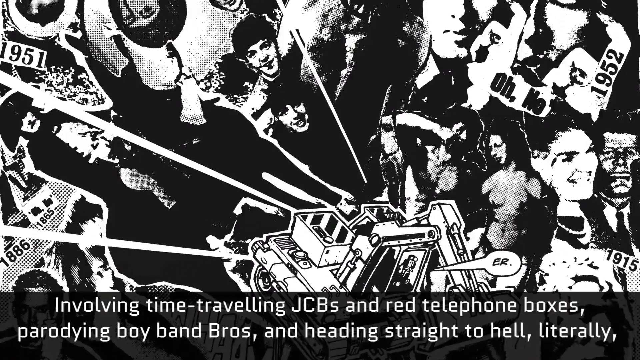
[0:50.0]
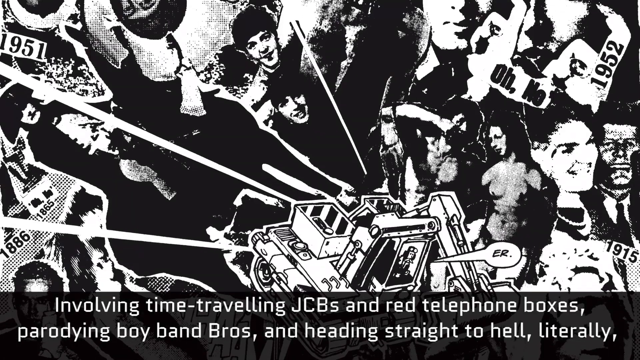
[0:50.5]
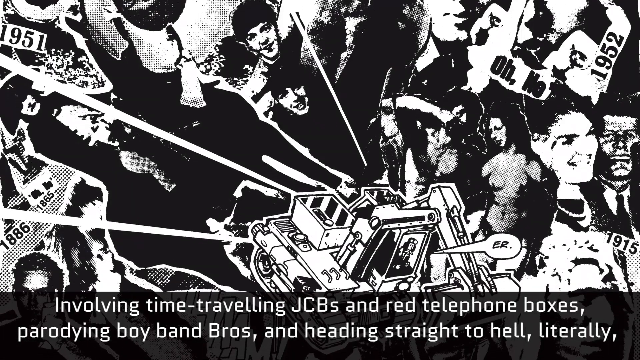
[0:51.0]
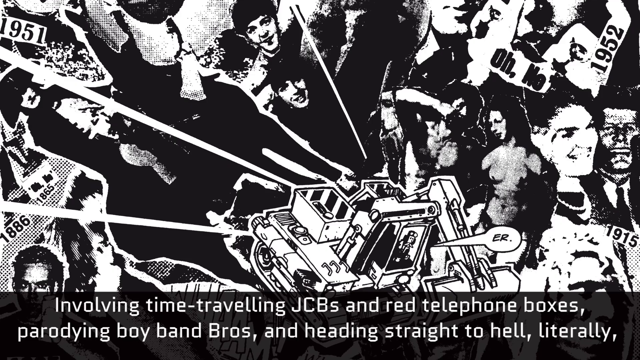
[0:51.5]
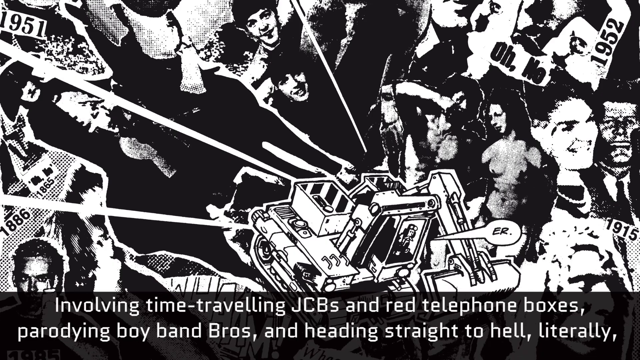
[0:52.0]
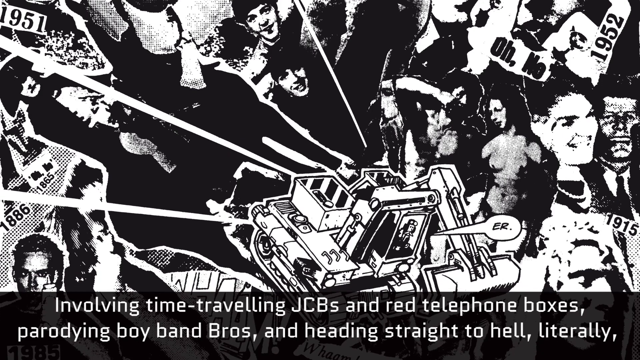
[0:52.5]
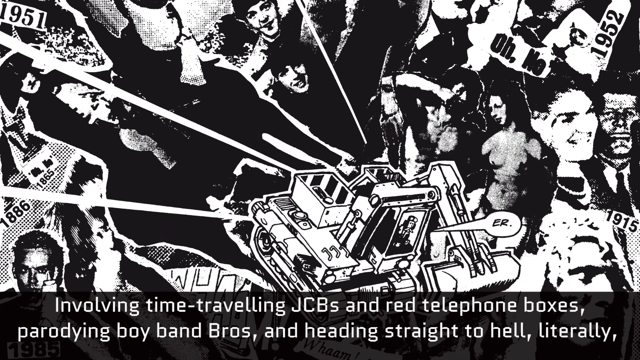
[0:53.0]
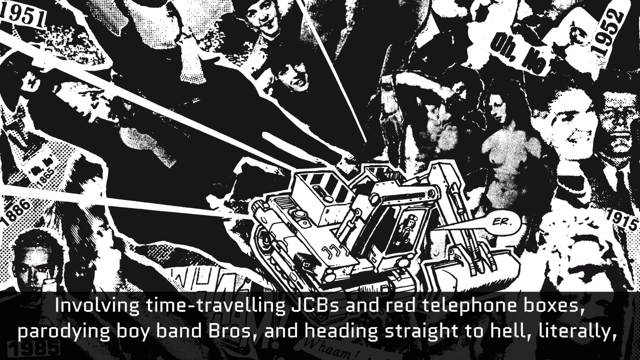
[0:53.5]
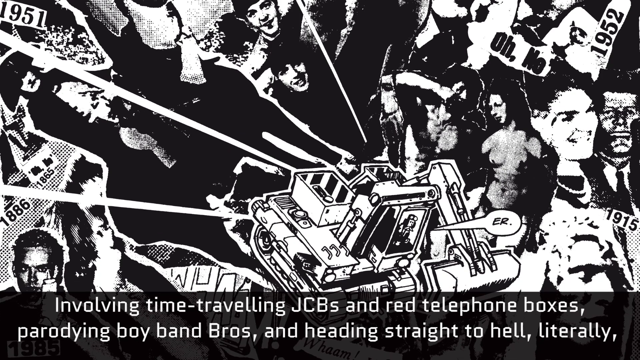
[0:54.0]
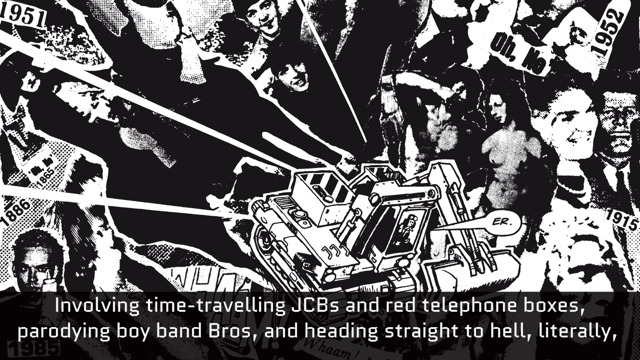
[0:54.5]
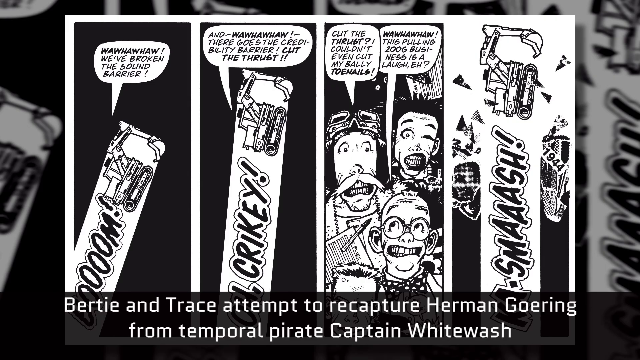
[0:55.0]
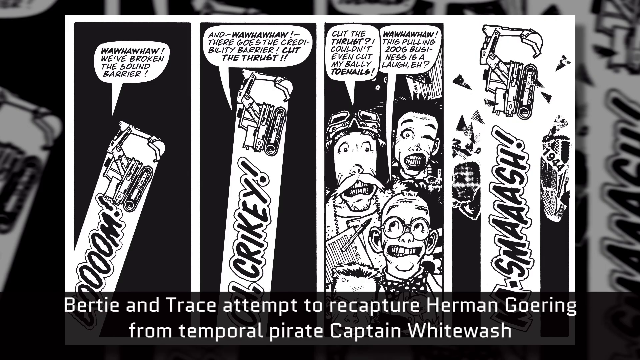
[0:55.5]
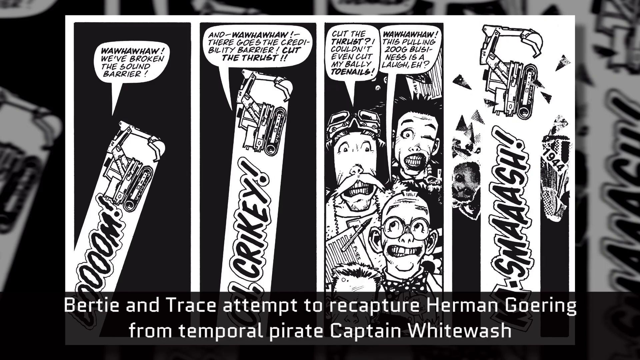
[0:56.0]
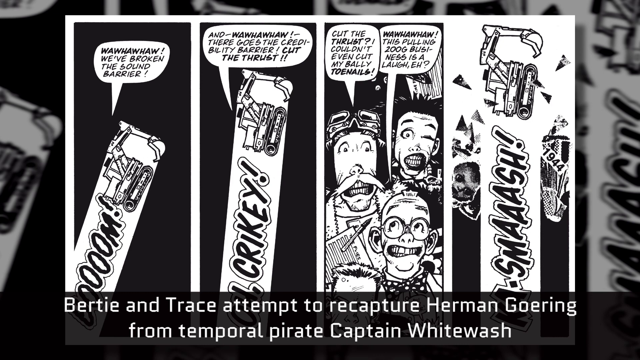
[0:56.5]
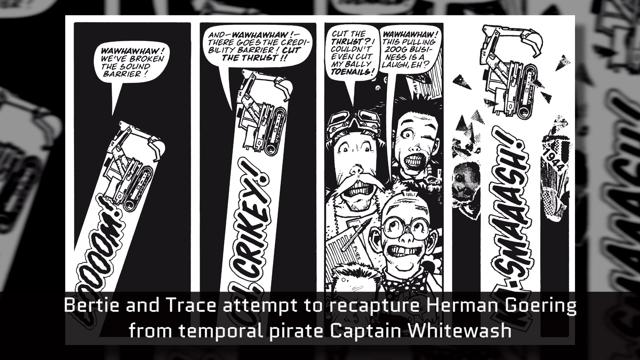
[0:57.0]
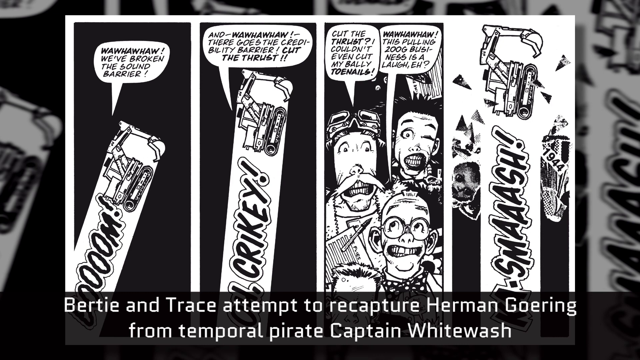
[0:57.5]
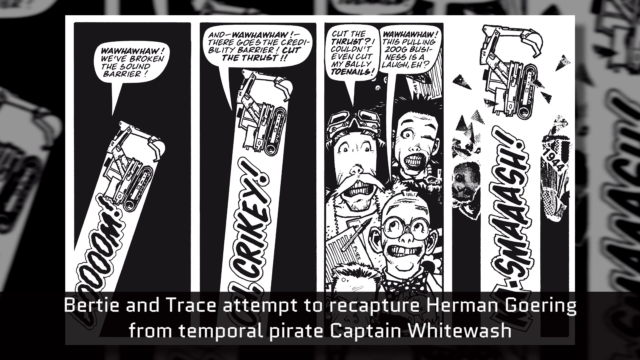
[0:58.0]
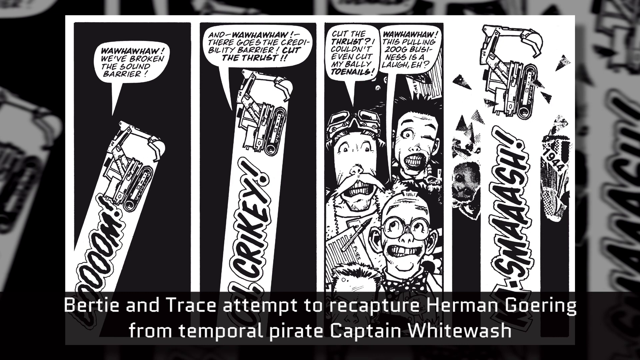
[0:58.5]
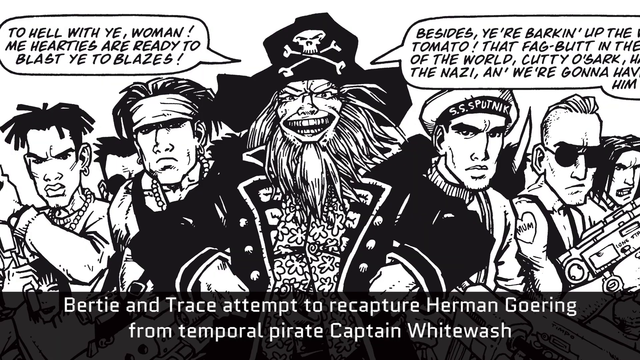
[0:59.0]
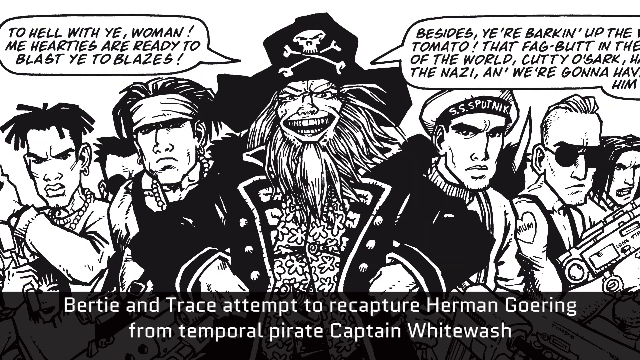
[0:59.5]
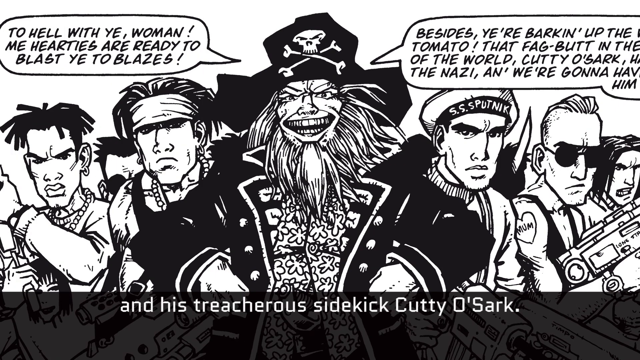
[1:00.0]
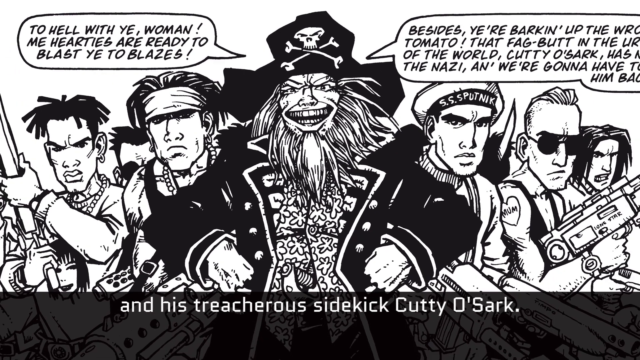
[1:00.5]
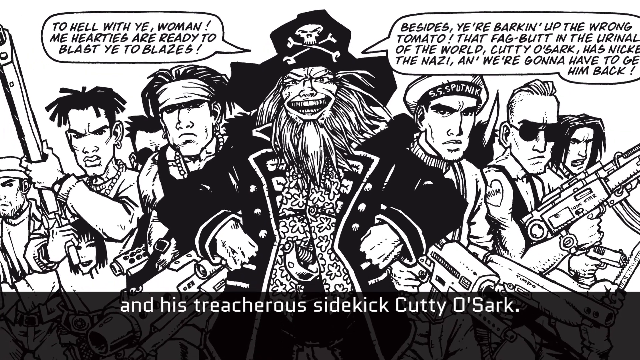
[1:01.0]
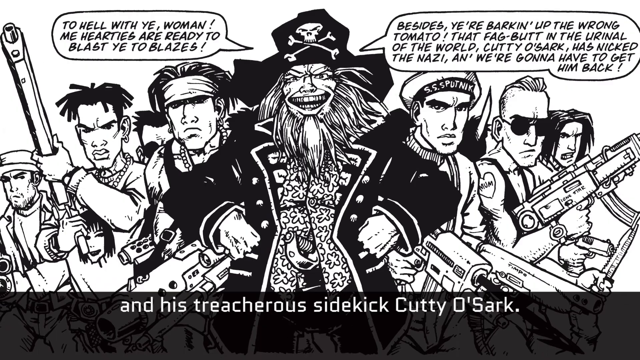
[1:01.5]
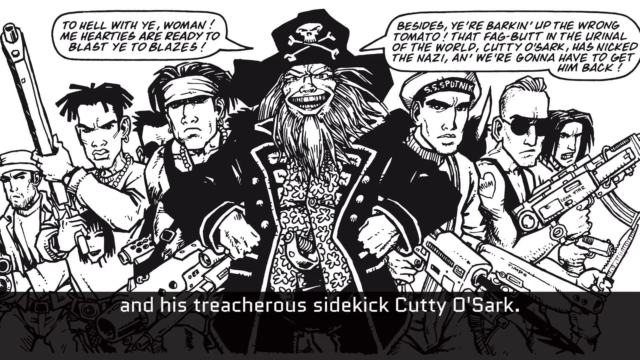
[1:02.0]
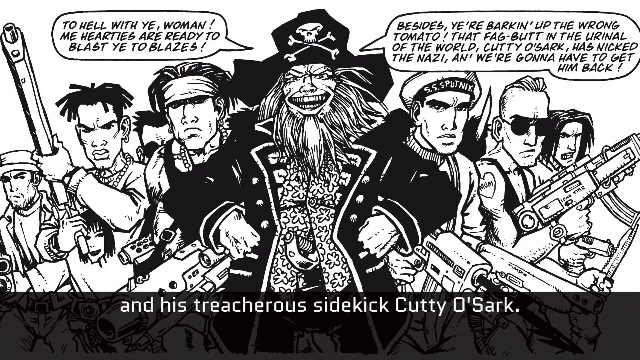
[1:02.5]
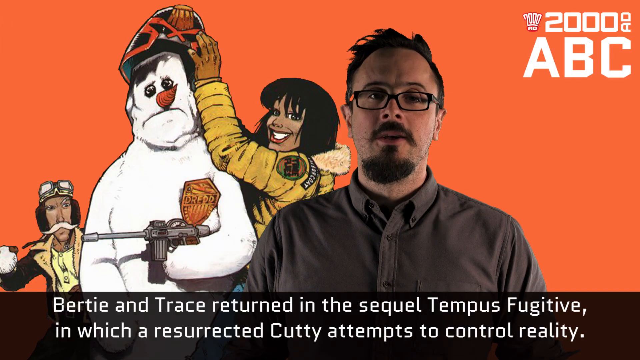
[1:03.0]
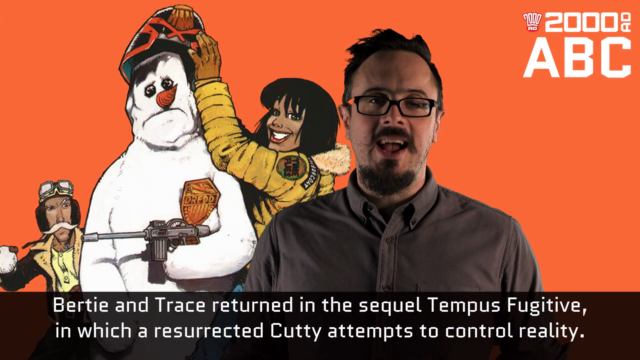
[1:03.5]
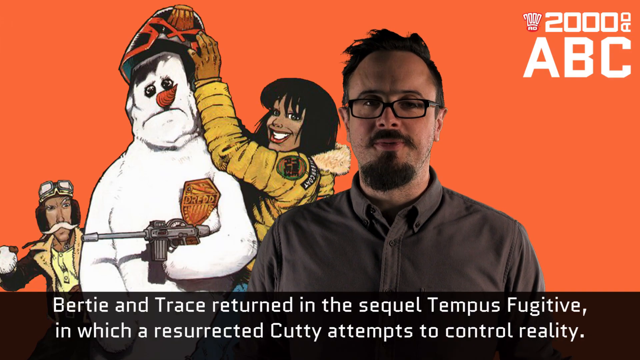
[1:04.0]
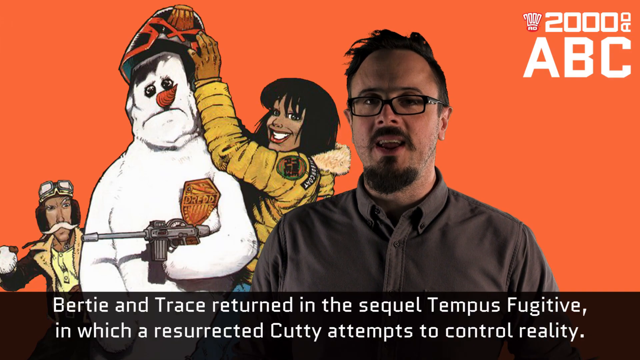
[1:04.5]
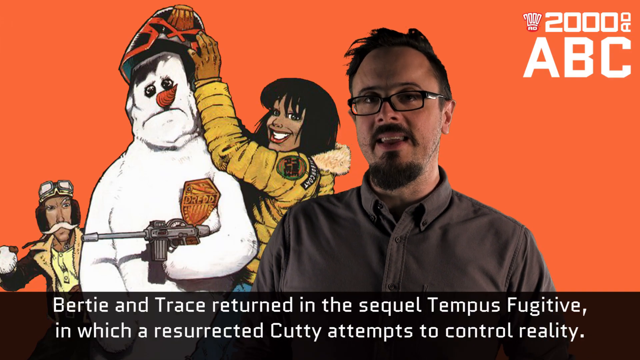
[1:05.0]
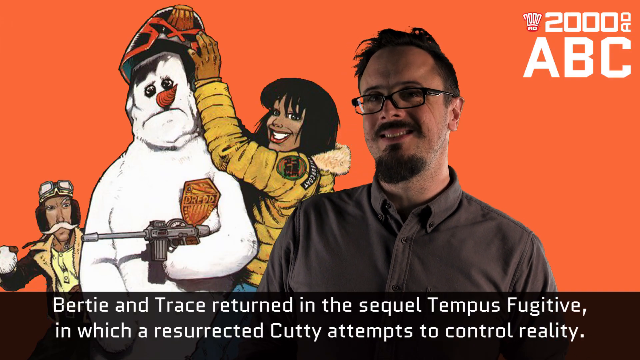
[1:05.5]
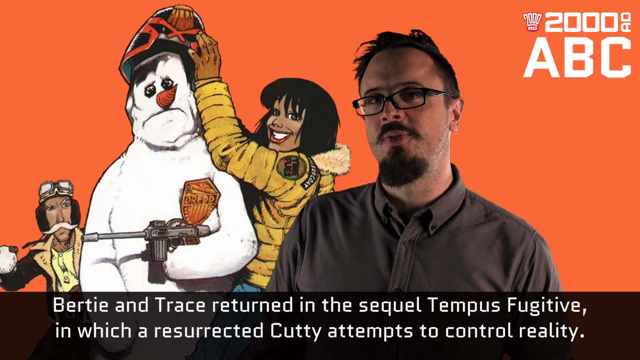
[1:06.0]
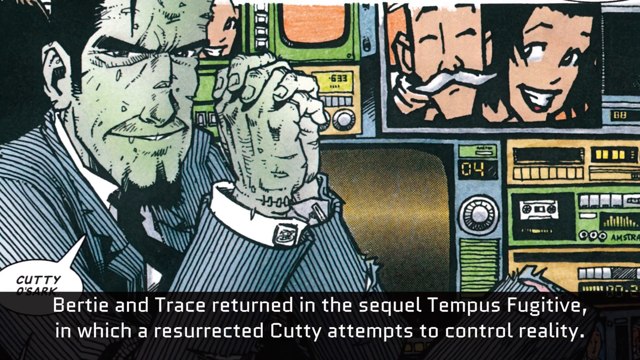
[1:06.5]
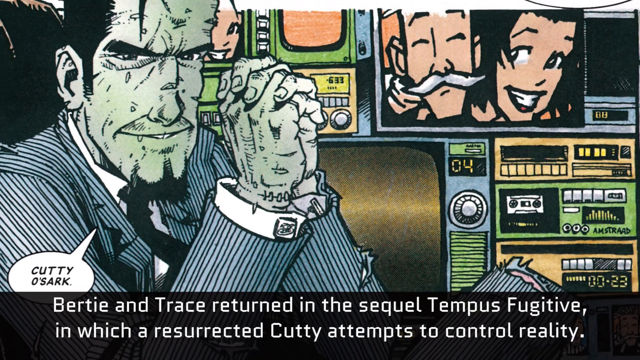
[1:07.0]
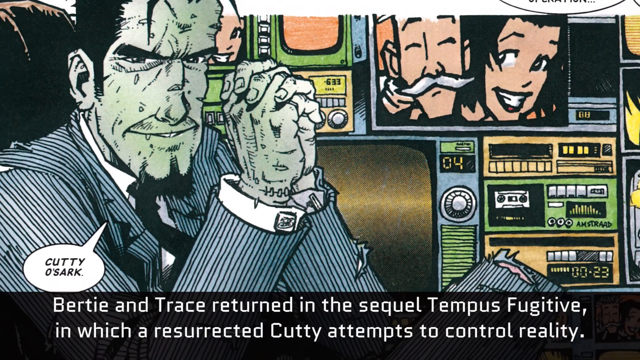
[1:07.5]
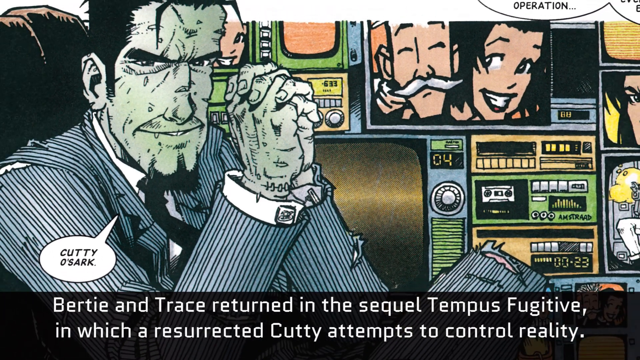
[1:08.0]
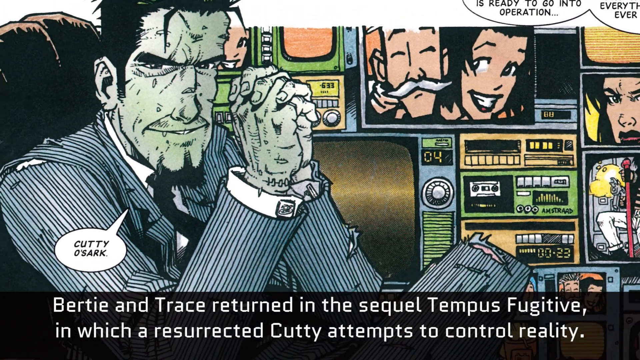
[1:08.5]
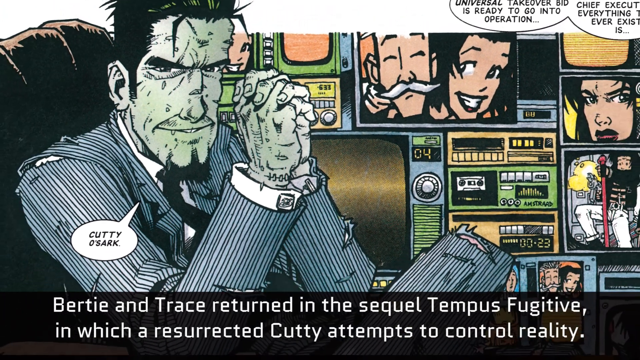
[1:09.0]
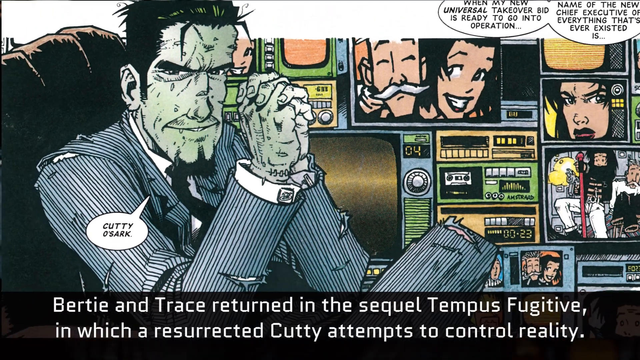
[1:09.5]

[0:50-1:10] Another look inside the comic appears, with text at the bottom reading "Birdie and Trace attempt to recapture Herman Goeran from temporal pirate". In the comic, speech reads "wah wah wah, we've broken the sound barrier", then the next caption reads "wah wah wah, there goes the credibility barrier, cut the thrust". In the next panel the pilot says "cut the thrust, couldn't even cut my bally toenails" and "wah wah wah, this pulling 200g business is a laugher". Another image of an aeroplane follows. Another part of the comic shows a pirate saying "to hell with you woman, me hearties are ready to blast you to blazes, besides you're barking up the wrong tomato". The video cuts back to the man standing in front of the orange screen, with text at the bottom reading "Bertie and Trace return in the sequel Tempest Fugitive in which a resurrected". The man keeps talking to the audience, and then the inside of a comic showing Frankenstein appears.